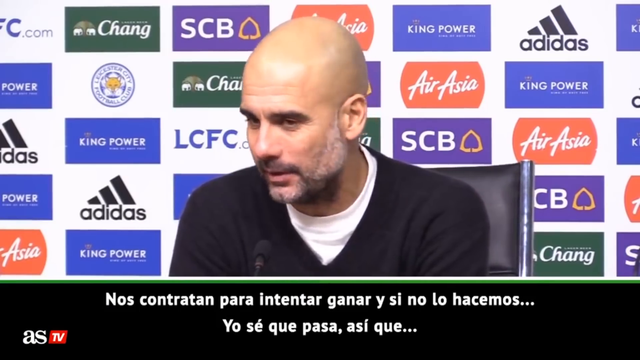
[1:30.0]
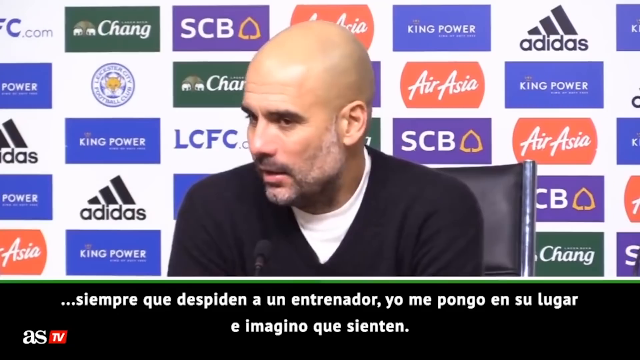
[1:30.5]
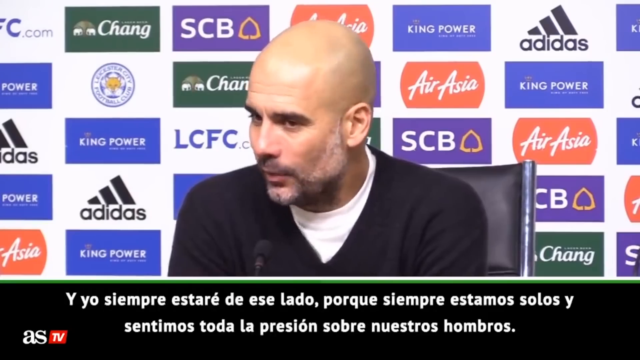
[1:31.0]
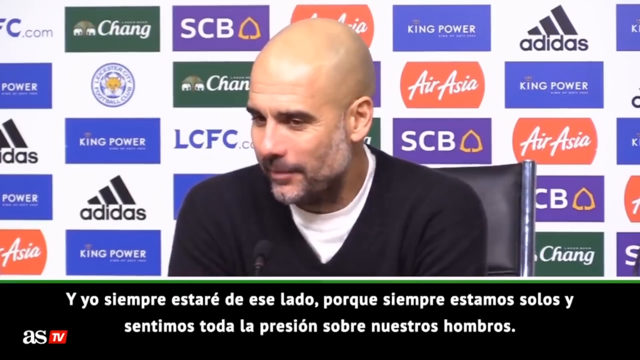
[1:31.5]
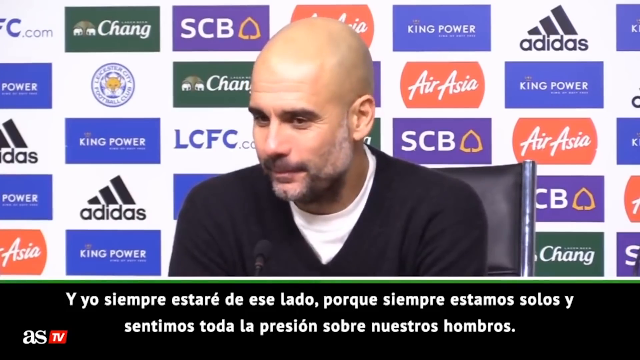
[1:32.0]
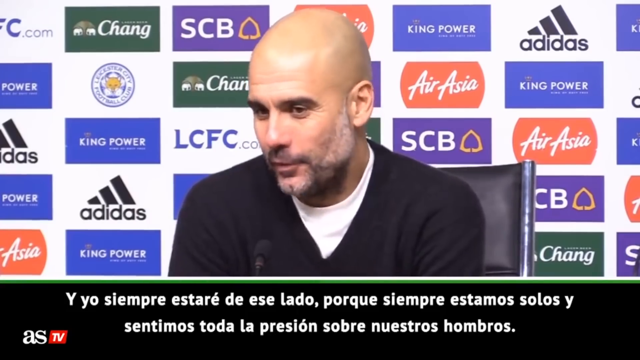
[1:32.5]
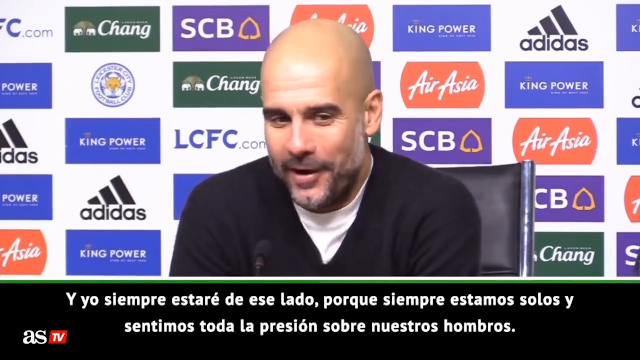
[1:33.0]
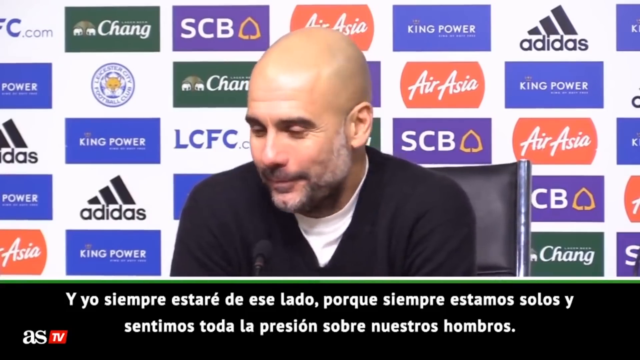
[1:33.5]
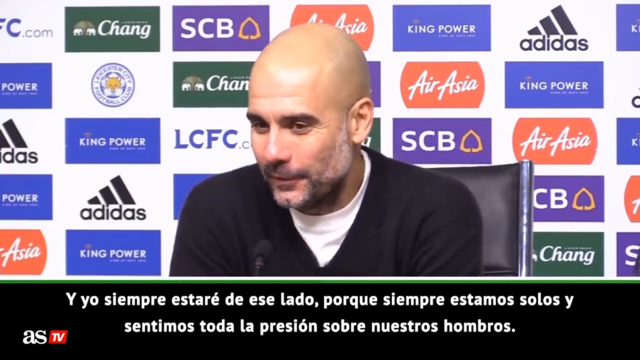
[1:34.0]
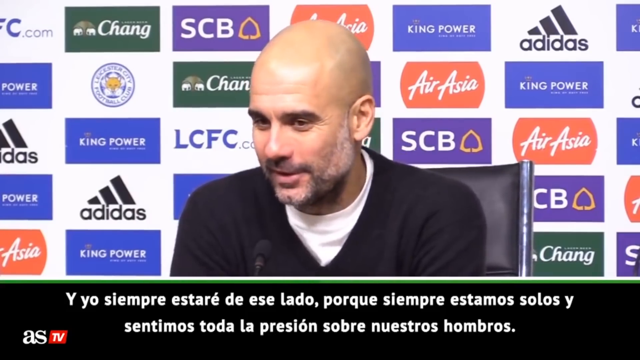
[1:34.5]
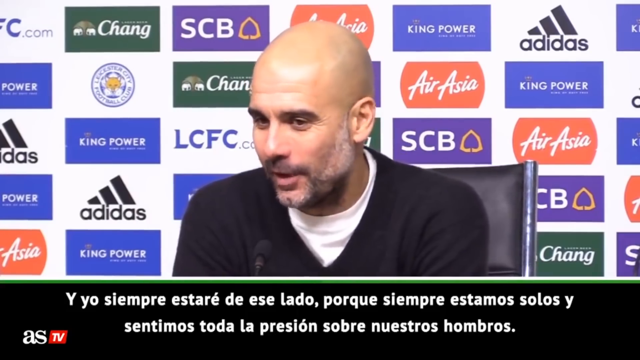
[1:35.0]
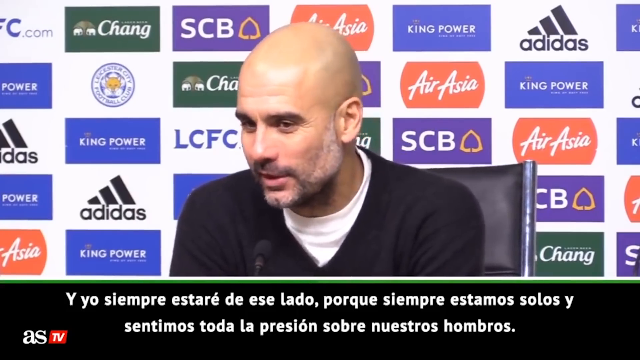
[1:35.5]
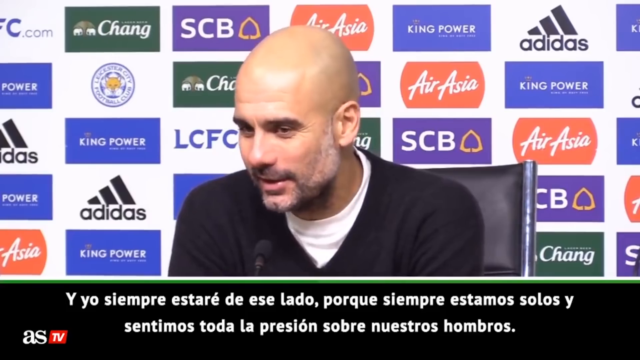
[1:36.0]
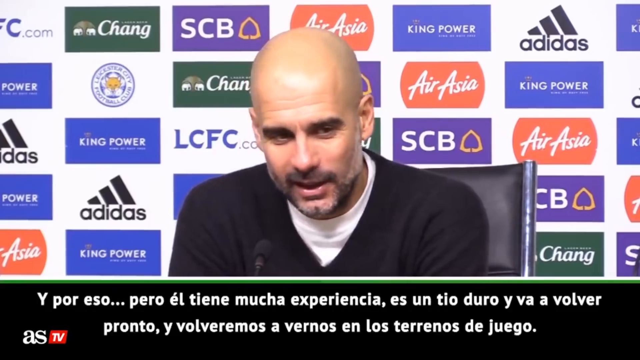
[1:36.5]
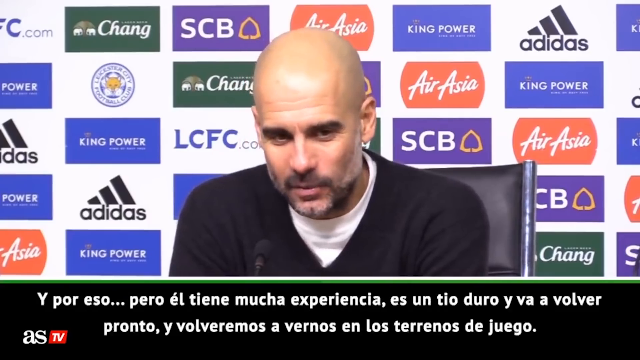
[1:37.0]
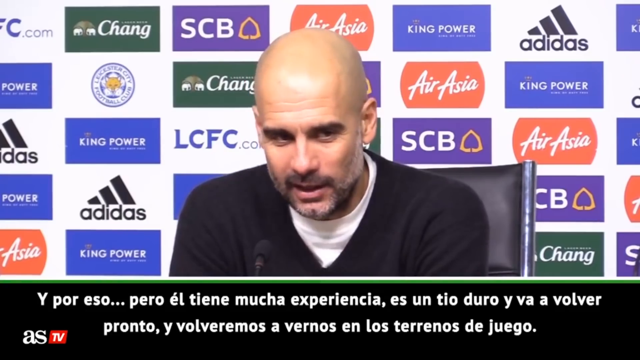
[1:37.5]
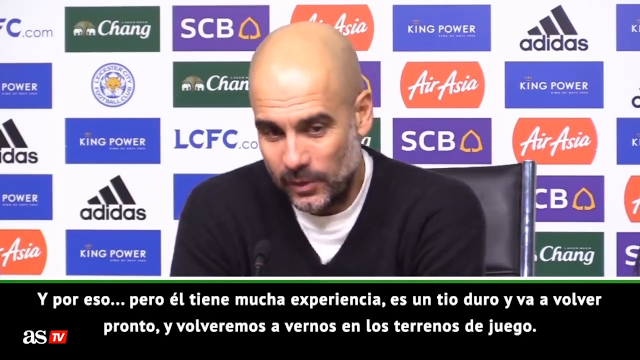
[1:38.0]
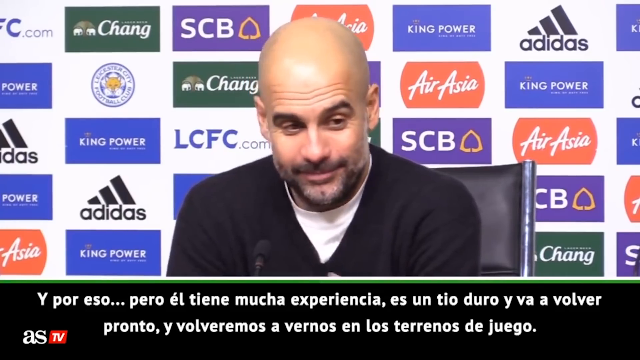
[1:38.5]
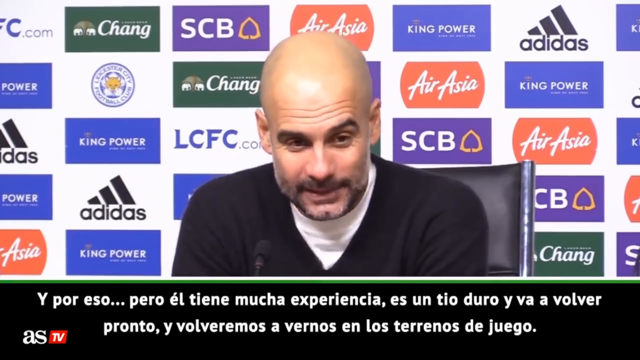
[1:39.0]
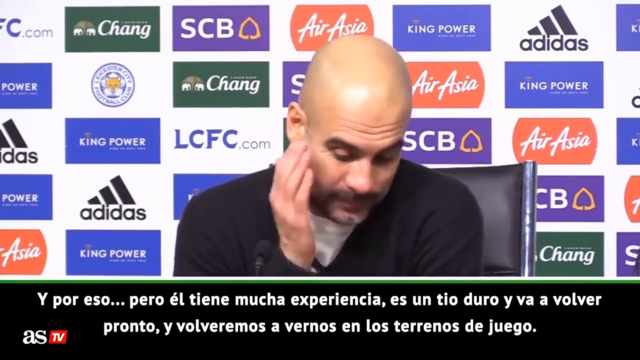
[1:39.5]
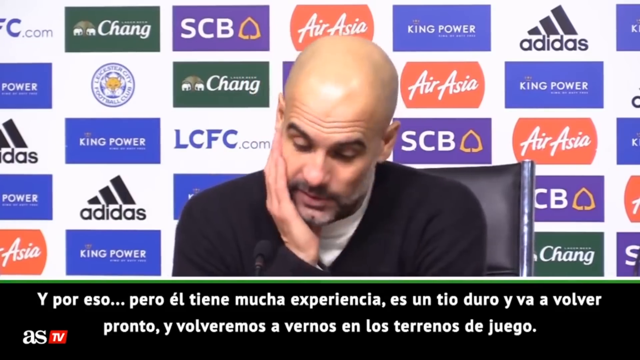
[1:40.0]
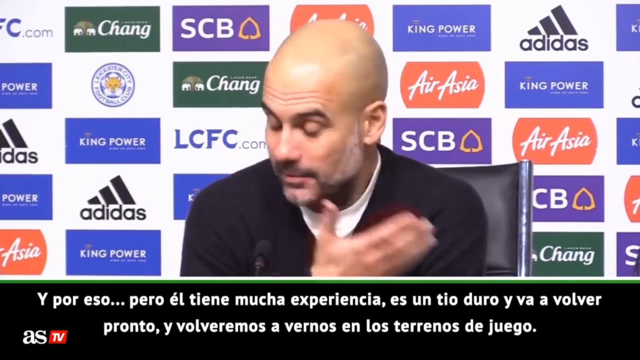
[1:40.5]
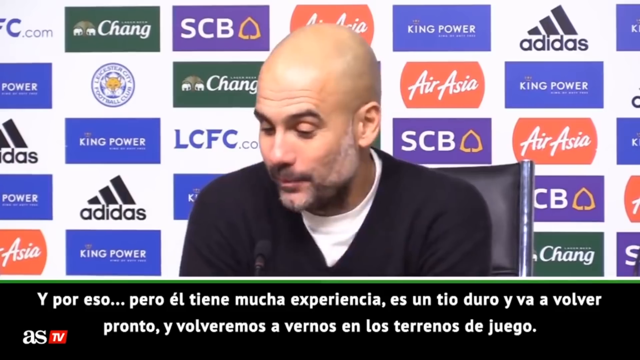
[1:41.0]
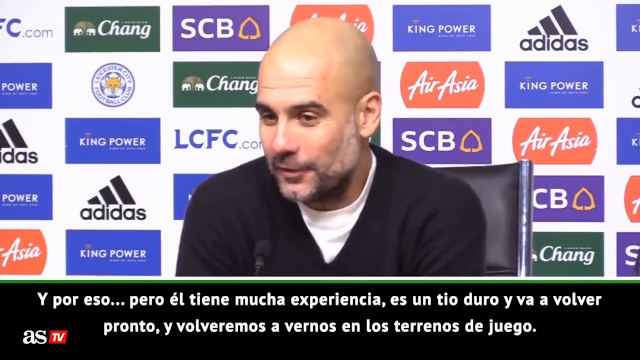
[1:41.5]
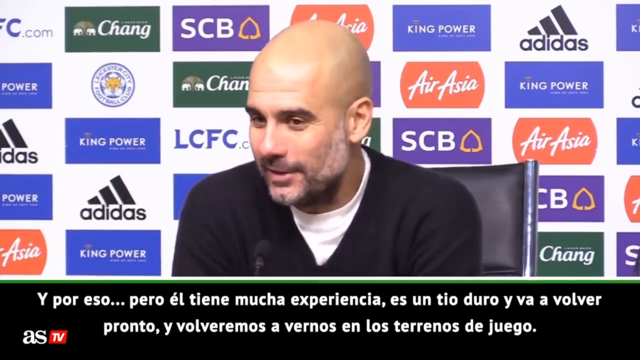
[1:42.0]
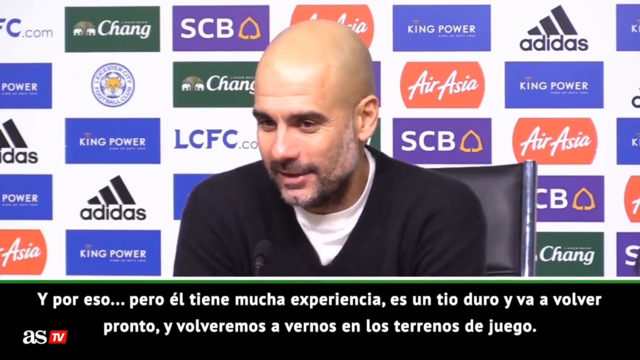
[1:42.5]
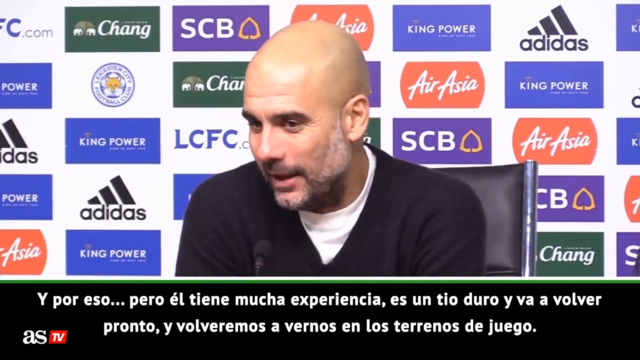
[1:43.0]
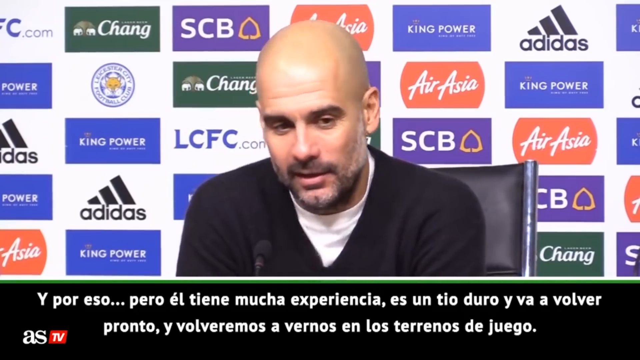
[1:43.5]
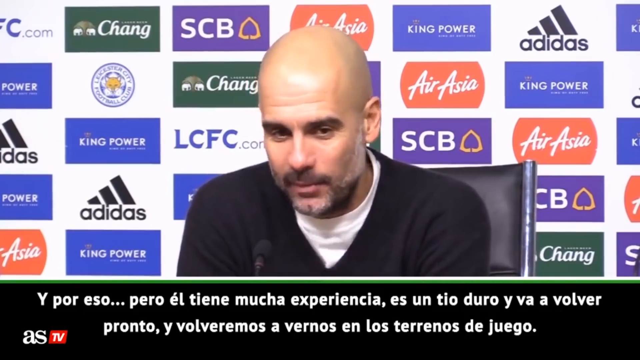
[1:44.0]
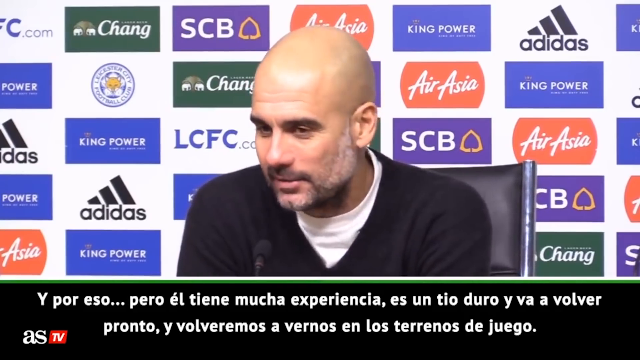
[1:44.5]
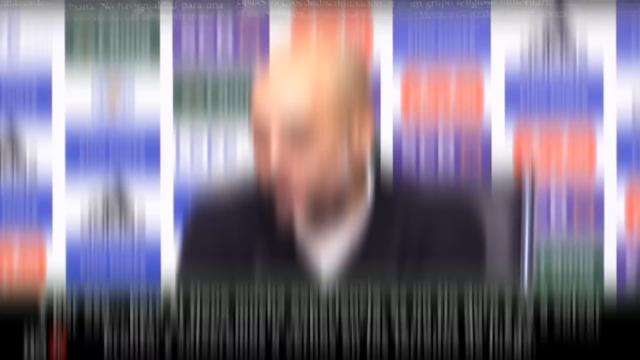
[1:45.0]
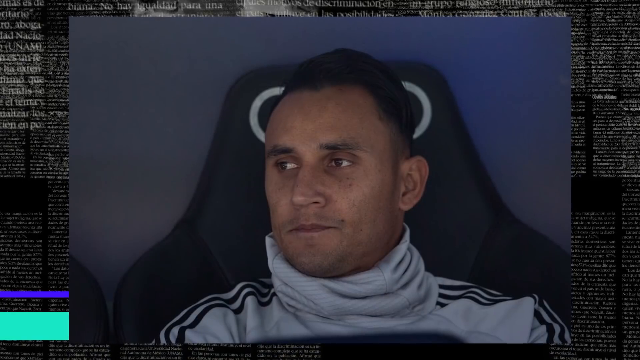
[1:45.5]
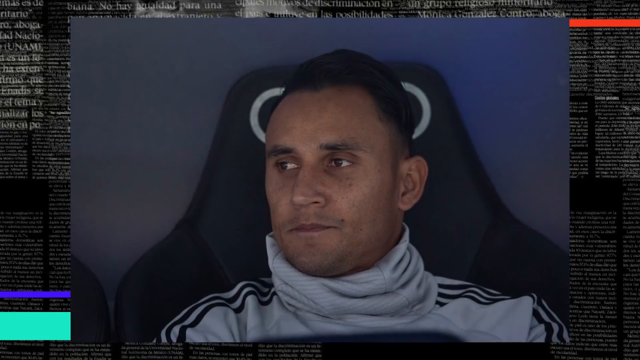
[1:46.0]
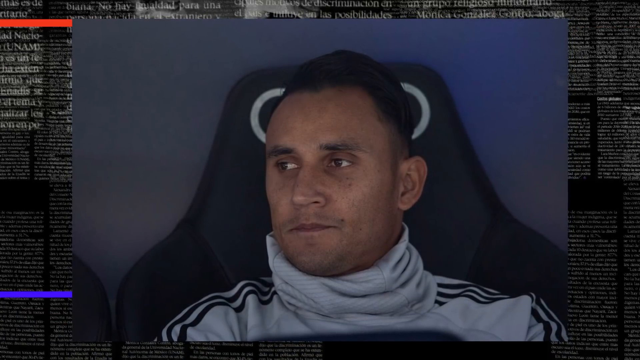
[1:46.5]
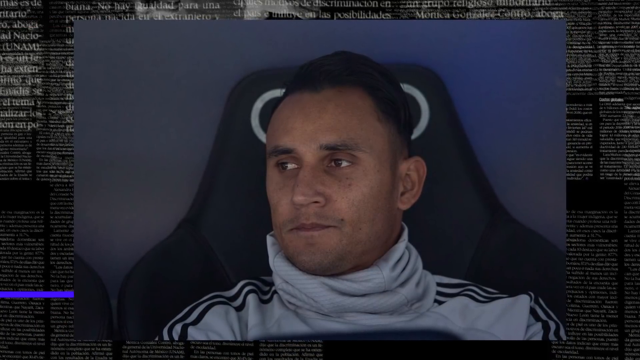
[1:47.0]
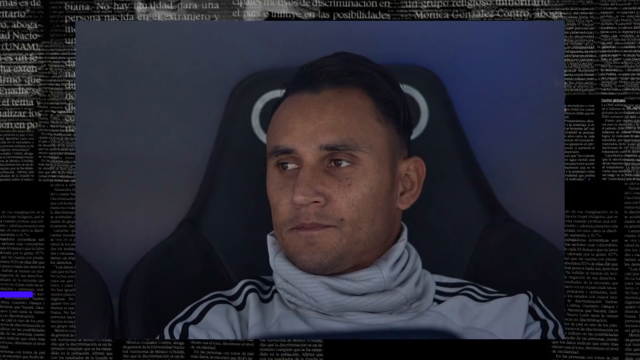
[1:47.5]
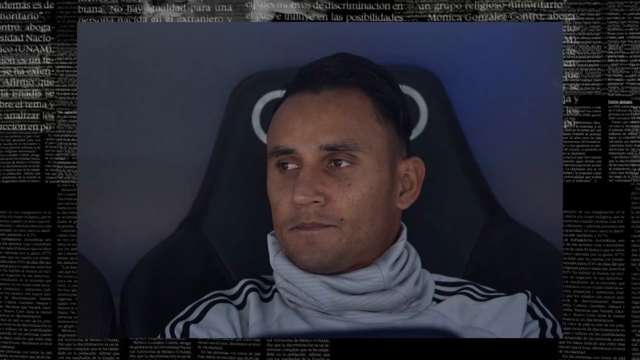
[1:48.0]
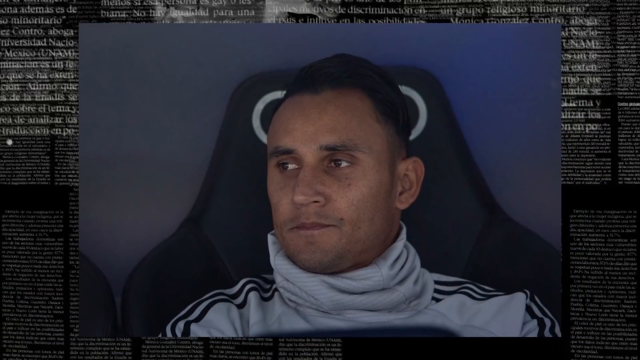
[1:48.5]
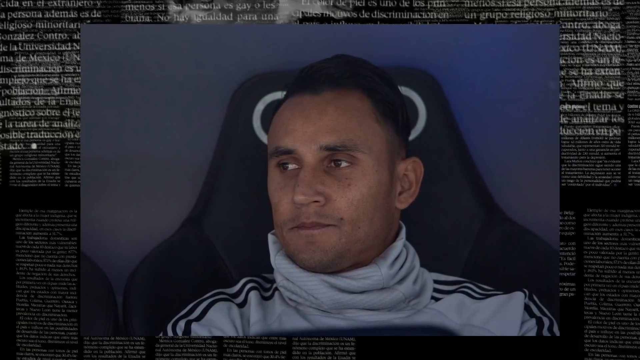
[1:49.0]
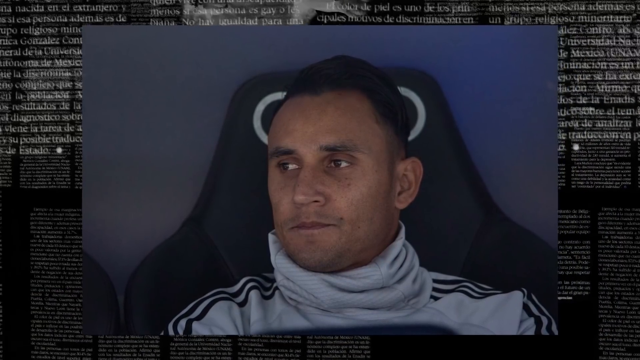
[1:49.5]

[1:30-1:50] The same bald man is shown in front of the various logos. Text below him says "Y POR ESO ... PERO EL TINE MUCHA EXPERIENCIA ES UN TIO DURO Y VA A VOLVER PRONTO Y VOLVERMOS A VERNOS EN LOS TERRENOS DE JUEGO". An ASTV logo is at the bottom left of the image. The image then shows a man looking fairly grim, with fairly short black hair, in a chair with a high black back. The shot pans out from him. He wears a light gray turtleneck with gathered folds of cloth along his neck and black piping along the shoulders.